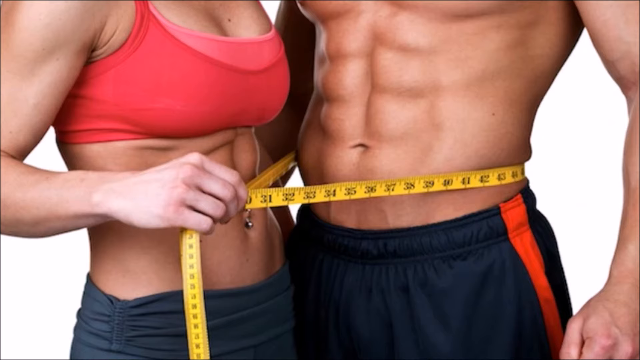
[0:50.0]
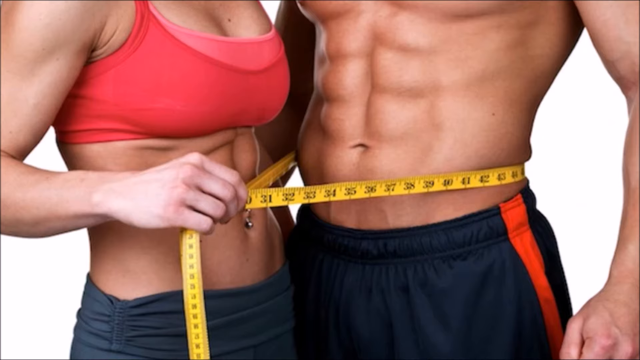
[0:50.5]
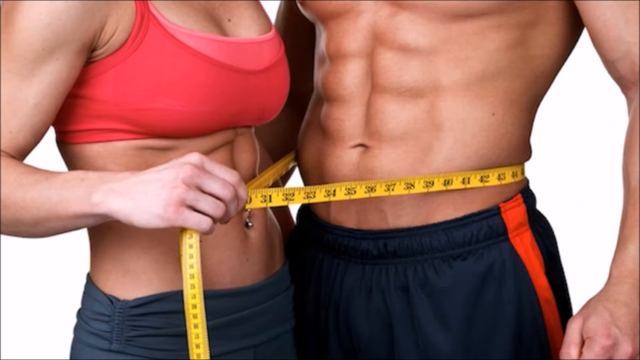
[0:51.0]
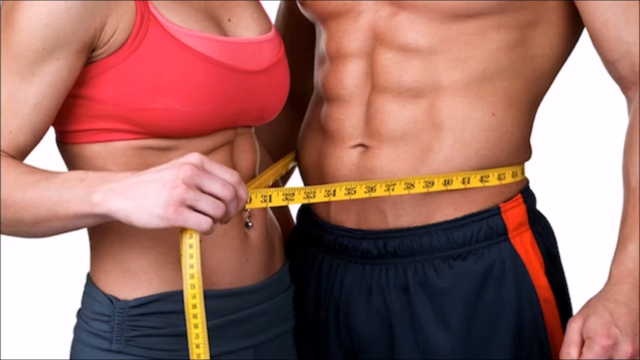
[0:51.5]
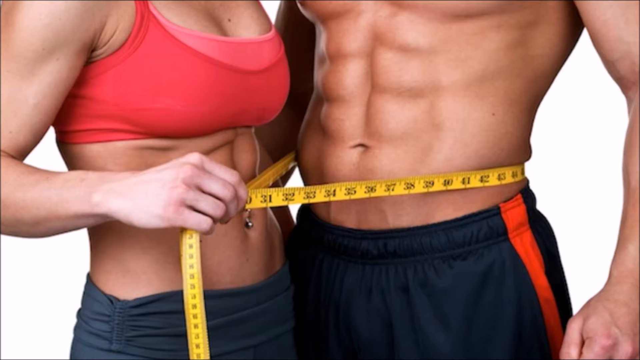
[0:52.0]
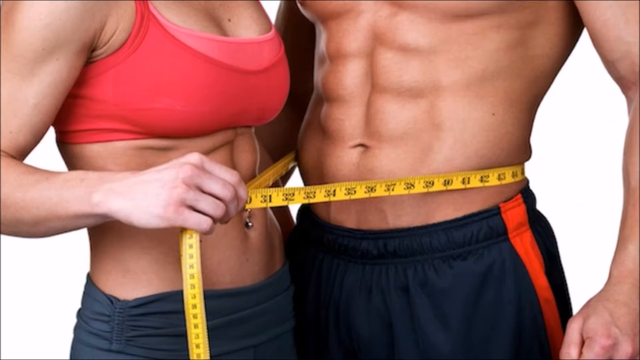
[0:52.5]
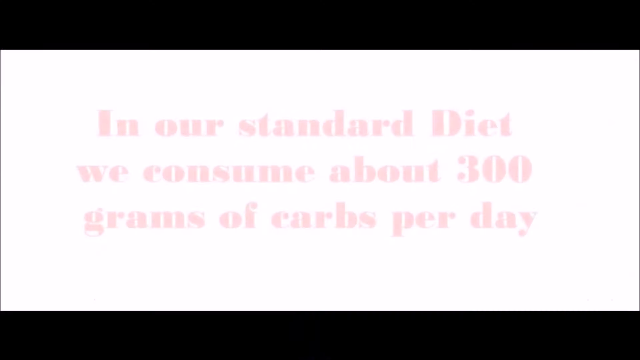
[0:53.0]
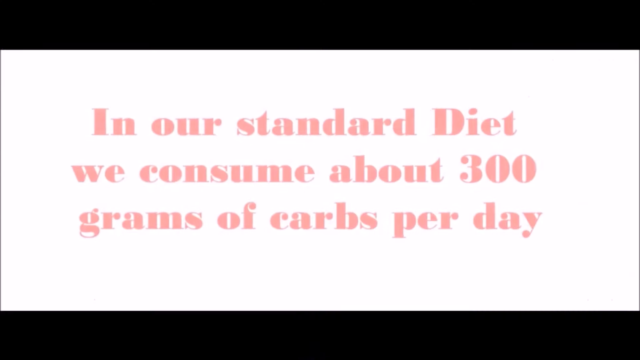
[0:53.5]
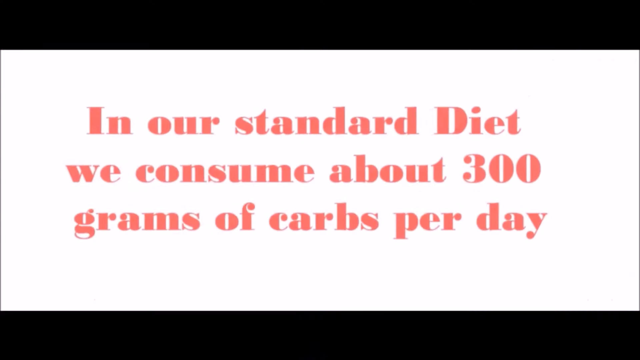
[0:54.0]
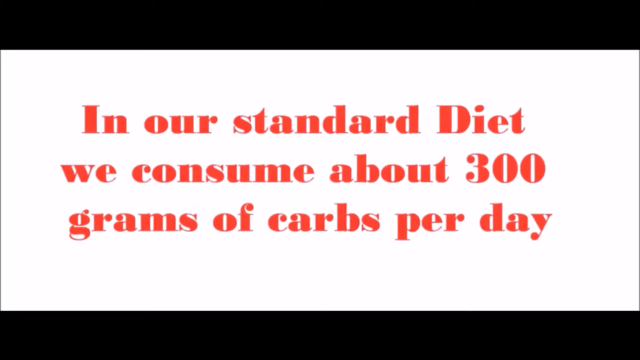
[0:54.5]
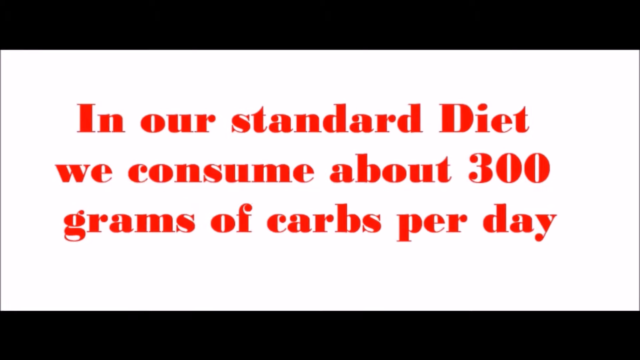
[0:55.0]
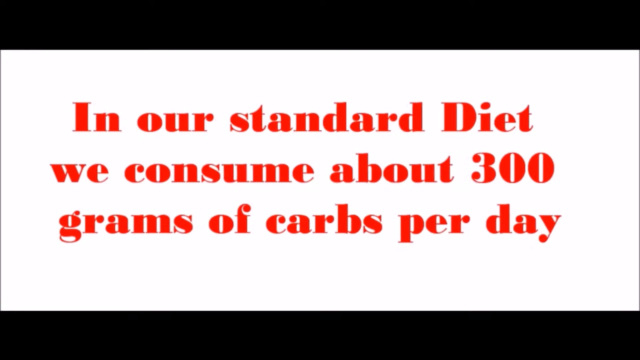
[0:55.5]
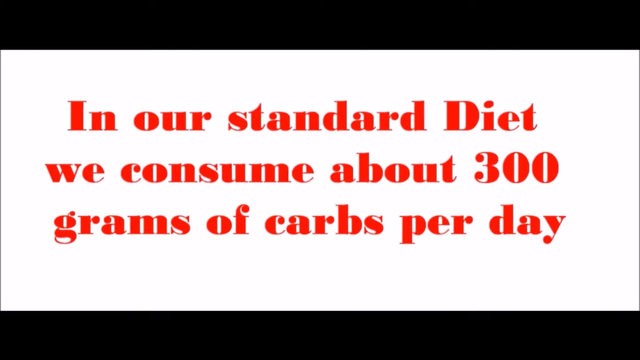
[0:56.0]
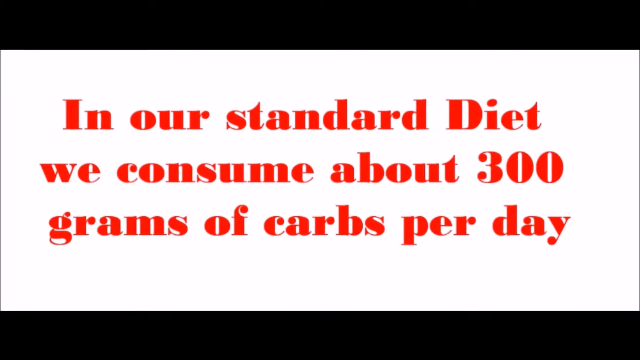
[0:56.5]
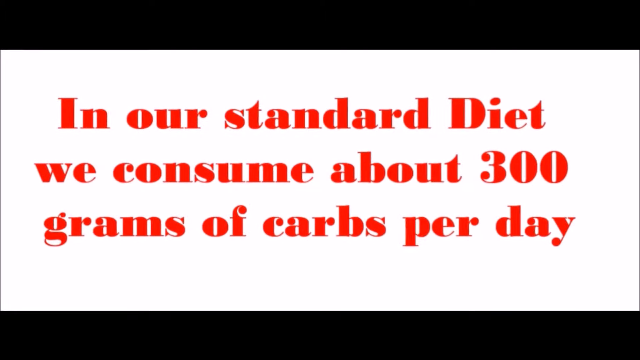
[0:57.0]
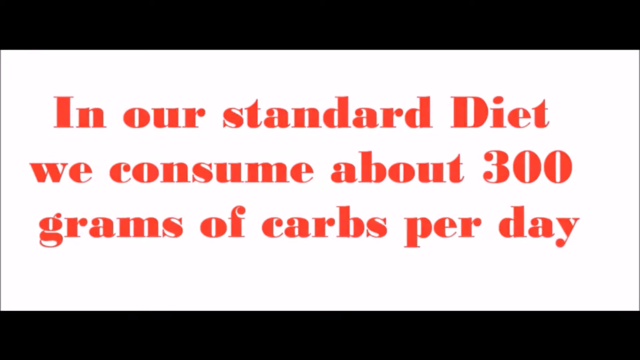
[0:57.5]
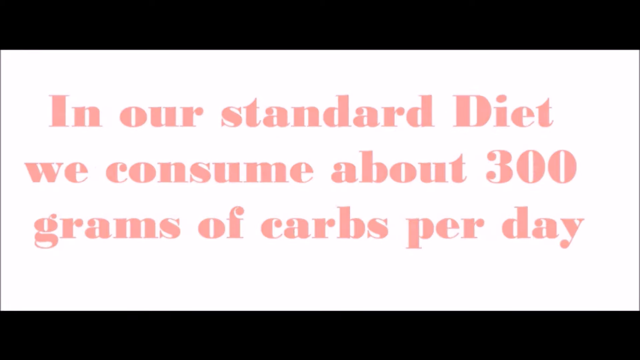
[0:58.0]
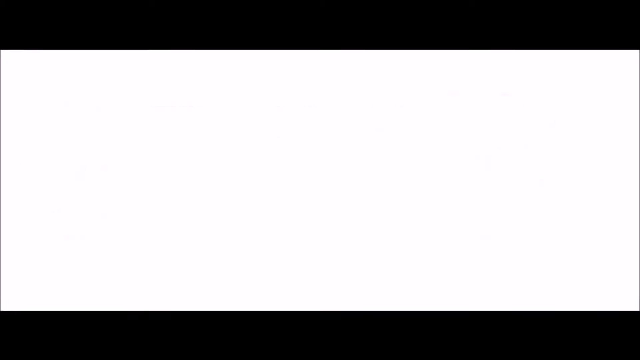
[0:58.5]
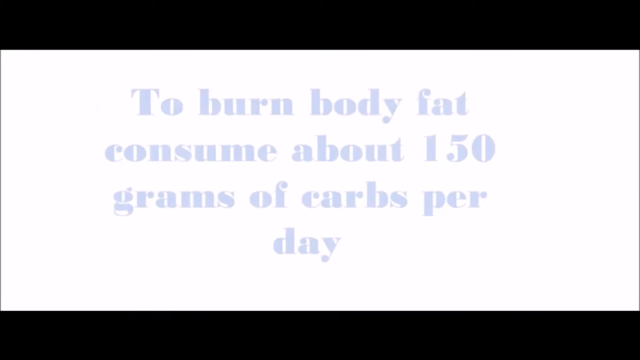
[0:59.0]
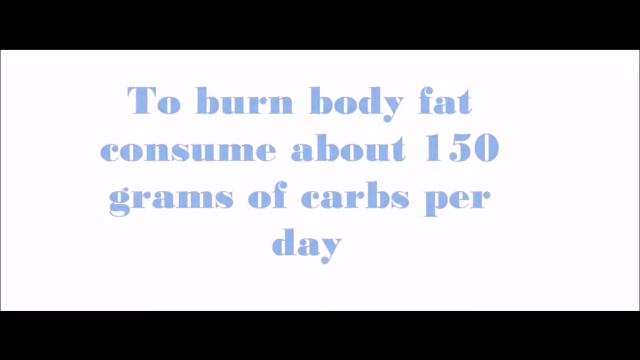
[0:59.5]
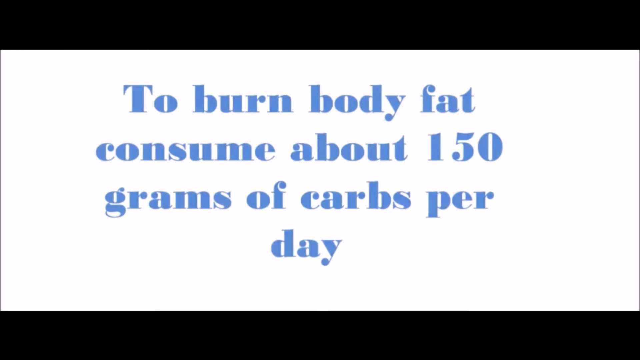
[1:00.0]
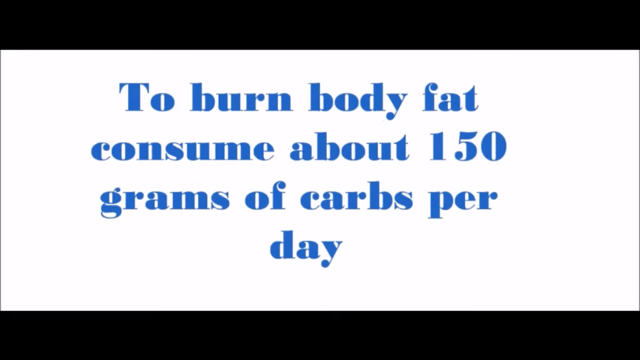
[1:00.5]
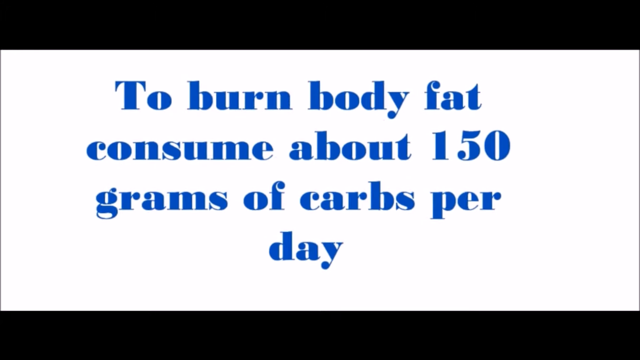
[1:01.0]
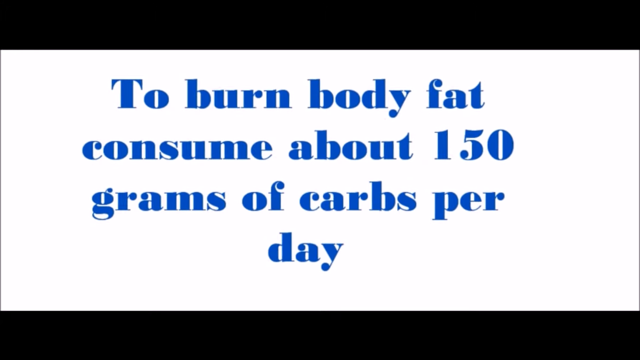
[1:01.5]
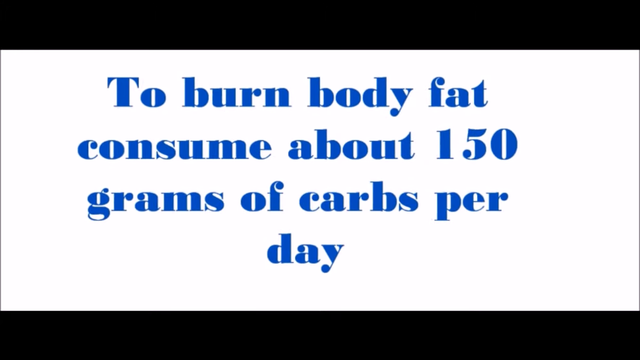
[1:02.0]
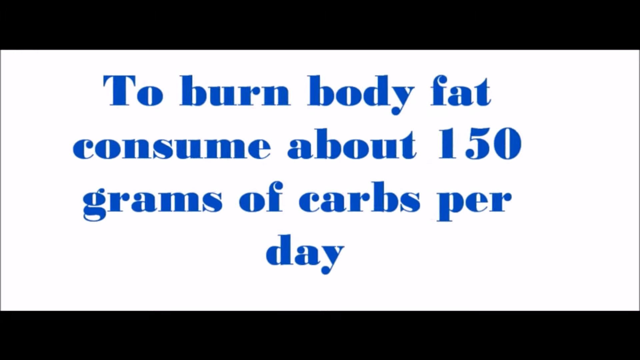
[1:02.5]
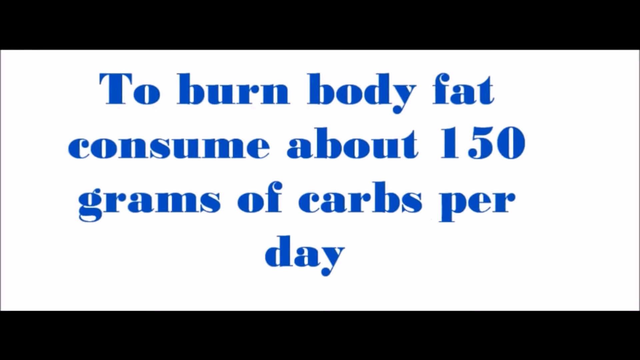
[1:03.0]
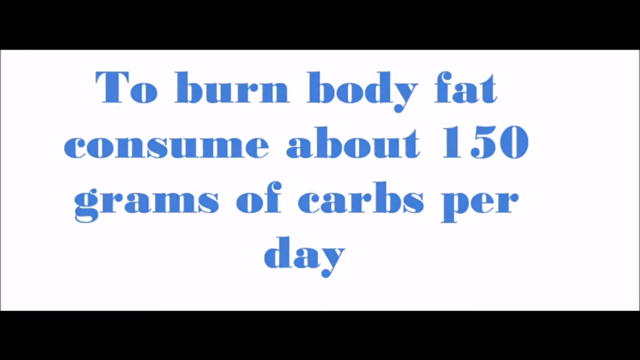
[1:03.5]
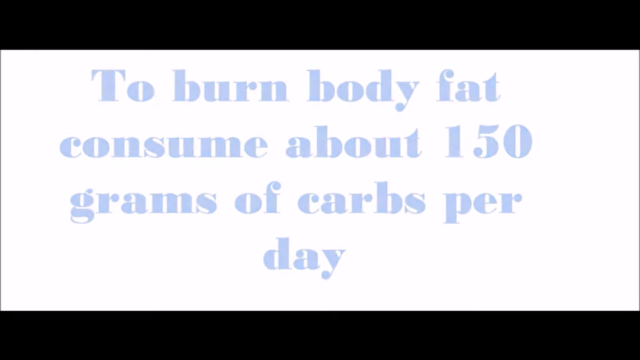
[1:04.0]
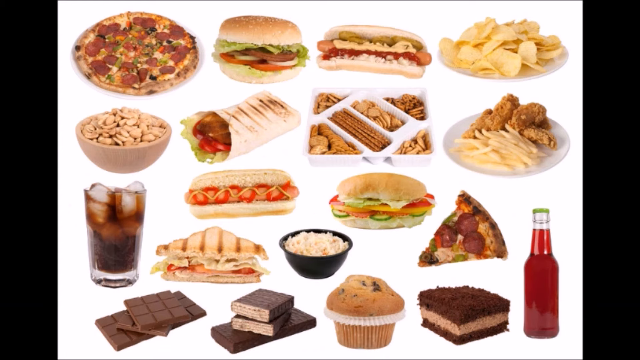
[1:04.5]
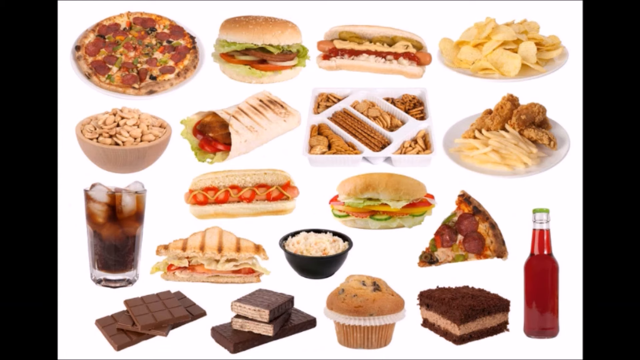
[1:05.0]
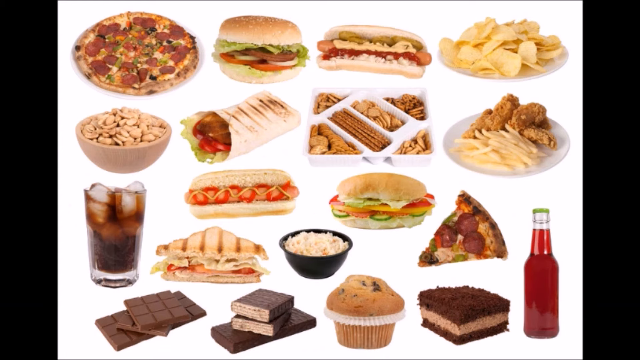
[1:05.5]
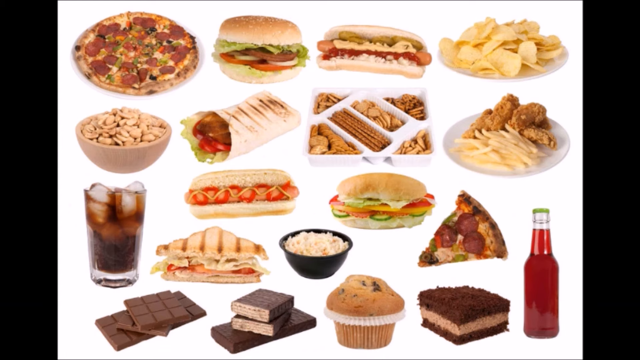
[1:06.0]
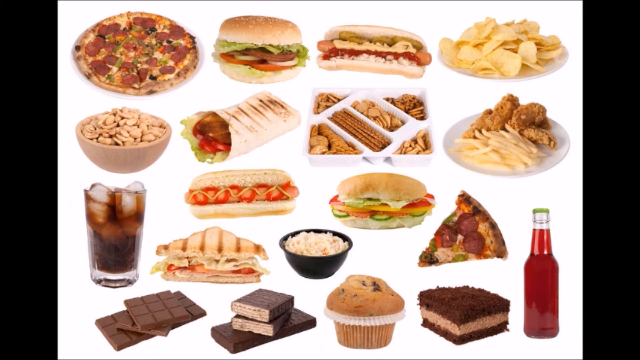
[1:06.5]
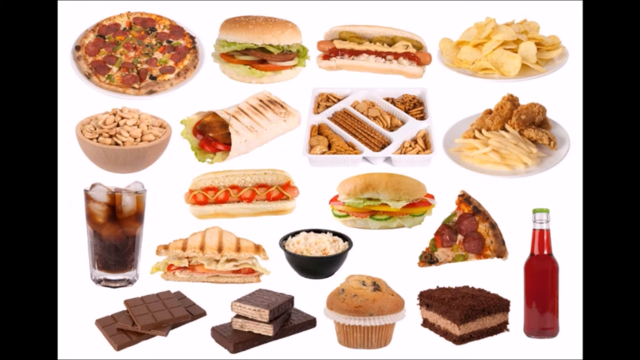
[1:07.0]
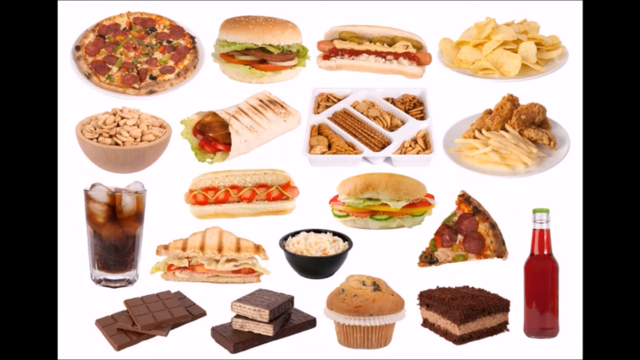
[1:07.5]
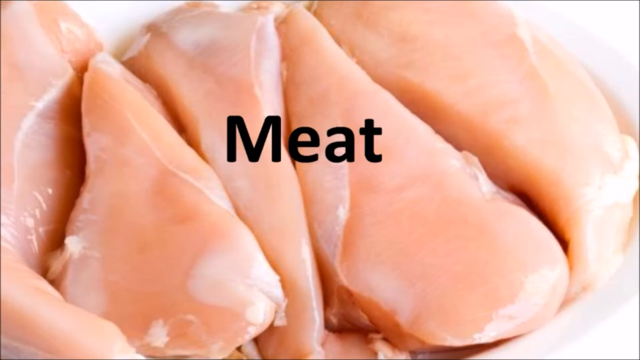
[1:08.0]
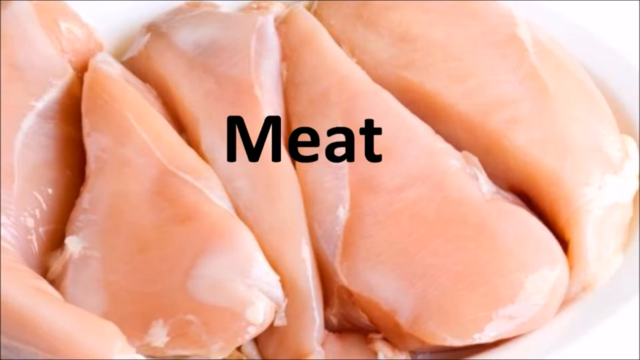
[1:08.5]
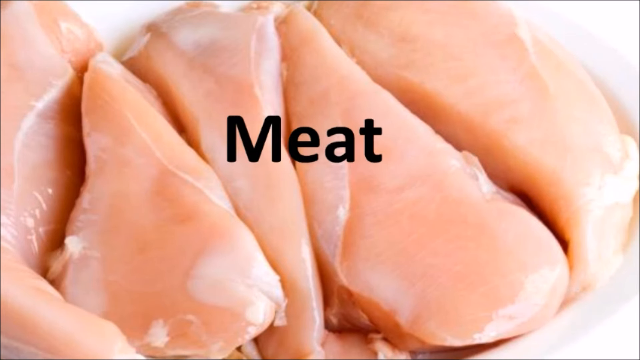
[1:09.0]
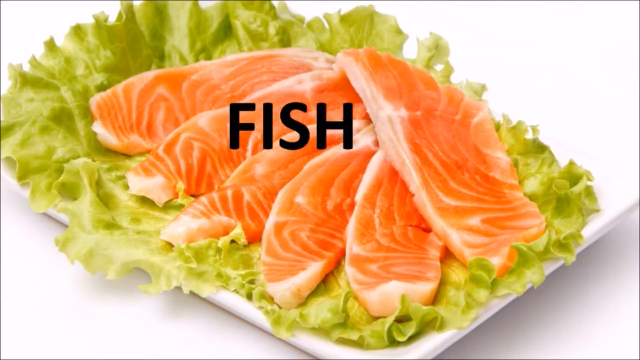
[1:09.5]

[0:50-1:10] A male and a female, both very fit, stand hip to hip. The male wears black basketball shorts with a red stripe around them. The female next to him wears a sports bra and workout pants, has her belly button pierced, and holds a yellow measuring tape around the guy's stomach. A white background then shows the text "in our standard diet we consume about 300 grams of carbs per day to burn body fat, consume about 150 grams of carbs per day." Next, on a white background, many unhealthy foods appear: a pizza, a cheeseburger, a hot dog, nachos, chicken fingers, French fries, soda, muffins, pastries, cakes, wraps, sandwiches, and a board holding all different kinds of pretzels. Then raw meat or raw chicken is shown with the word "meat" on it, followed by raw fish with the word "fish" on it.